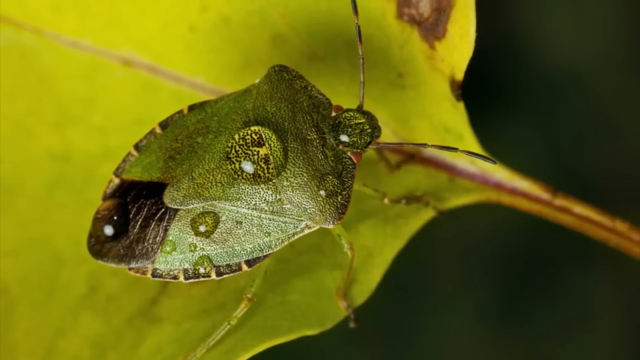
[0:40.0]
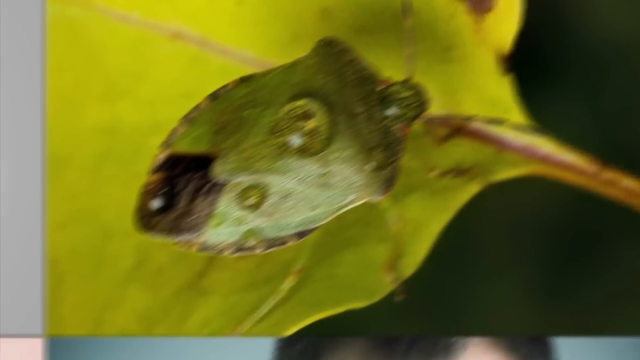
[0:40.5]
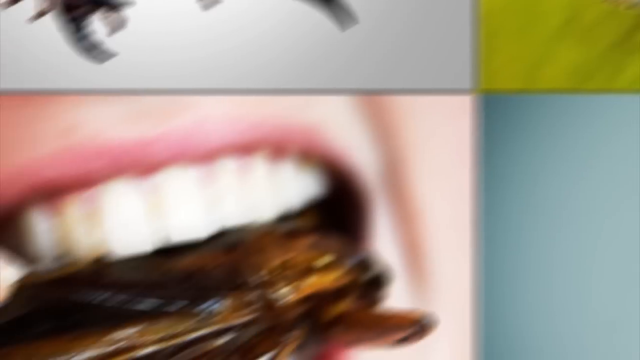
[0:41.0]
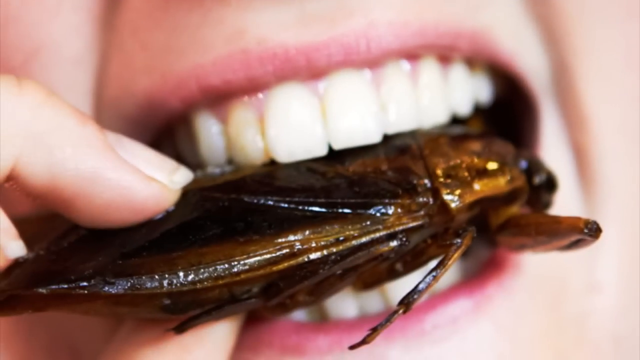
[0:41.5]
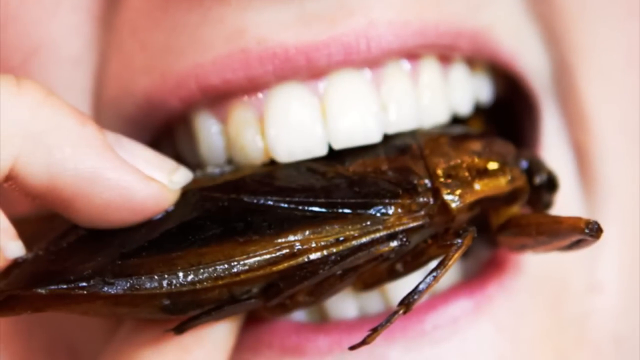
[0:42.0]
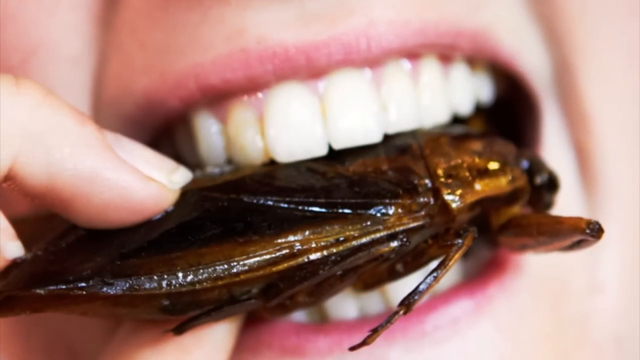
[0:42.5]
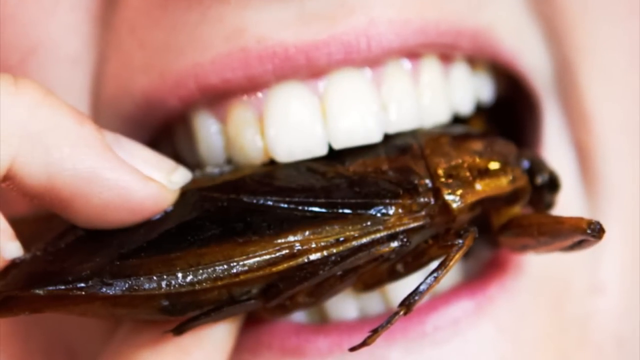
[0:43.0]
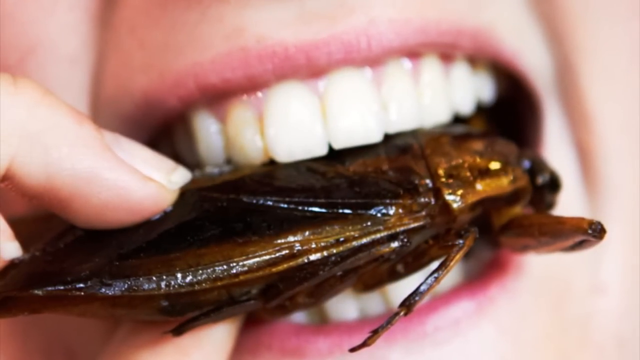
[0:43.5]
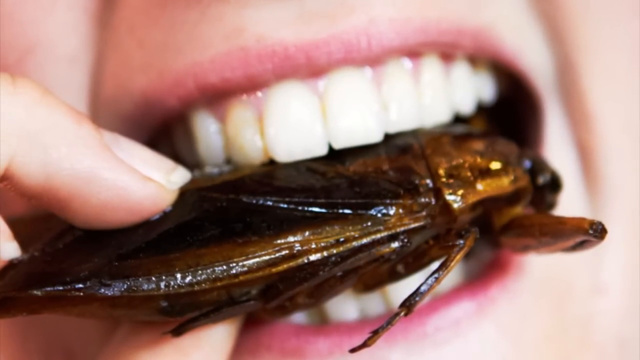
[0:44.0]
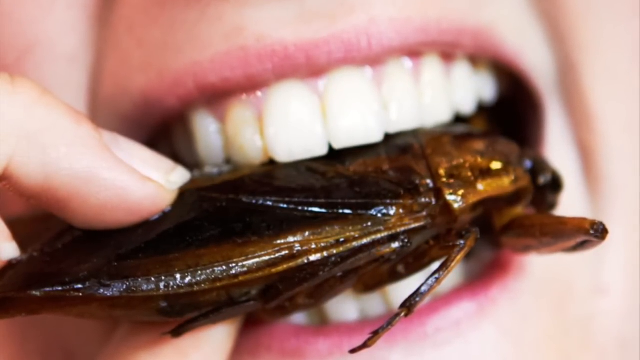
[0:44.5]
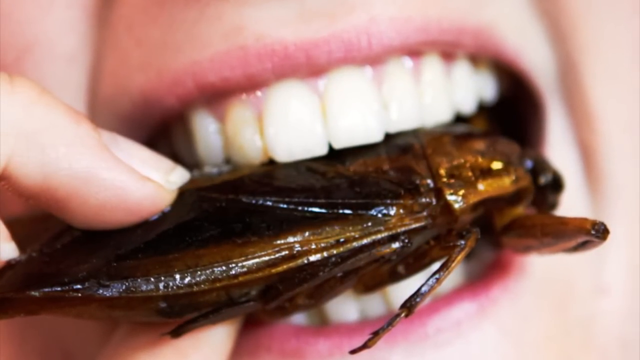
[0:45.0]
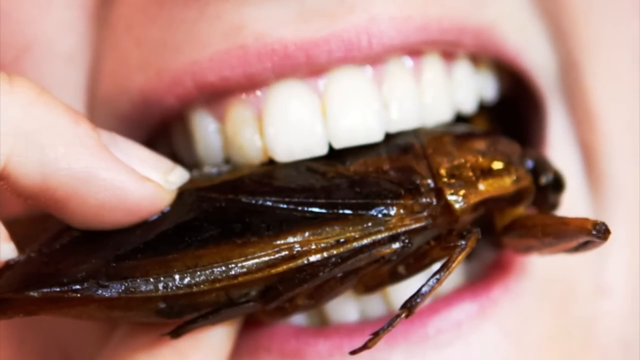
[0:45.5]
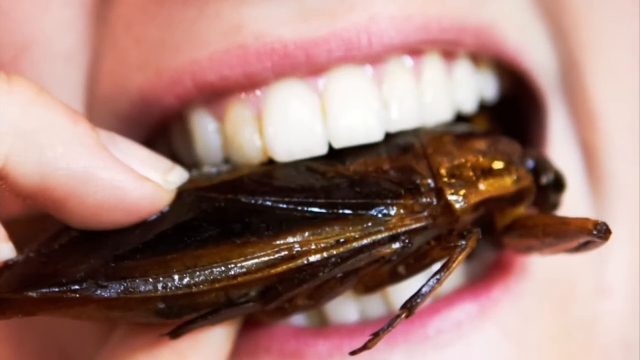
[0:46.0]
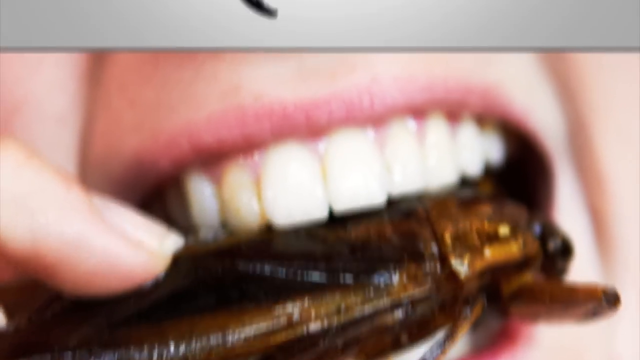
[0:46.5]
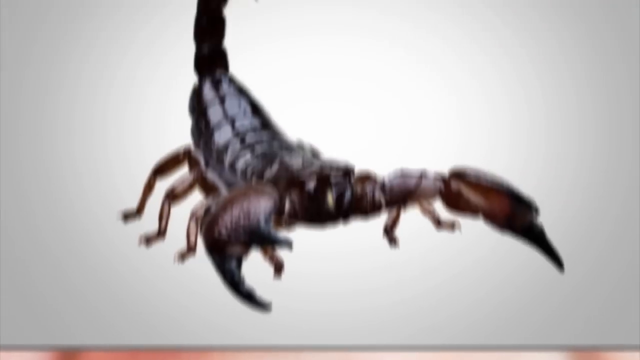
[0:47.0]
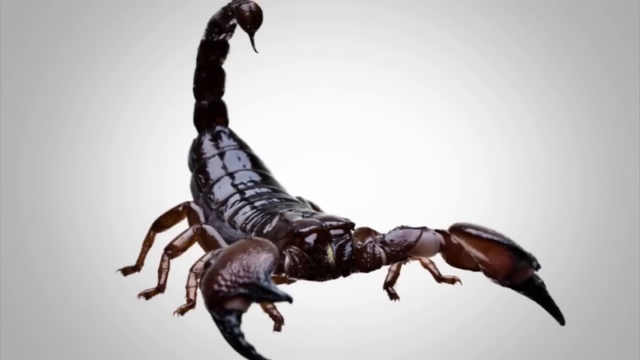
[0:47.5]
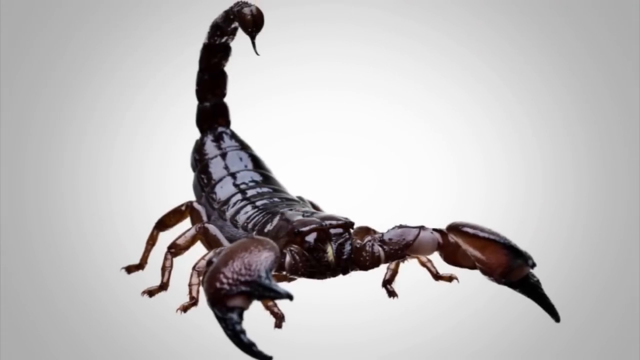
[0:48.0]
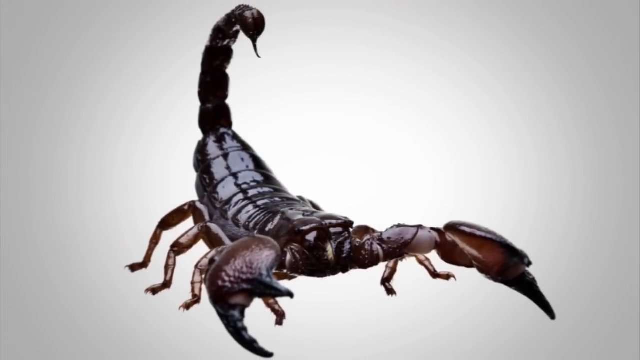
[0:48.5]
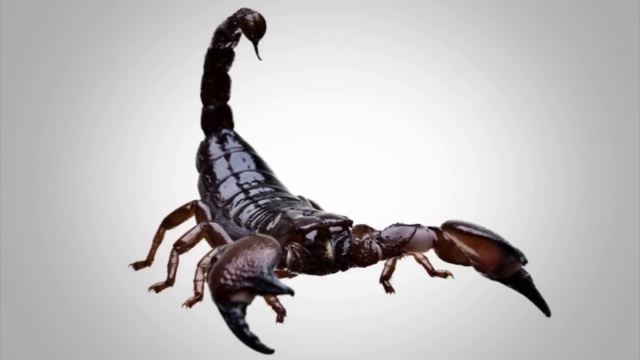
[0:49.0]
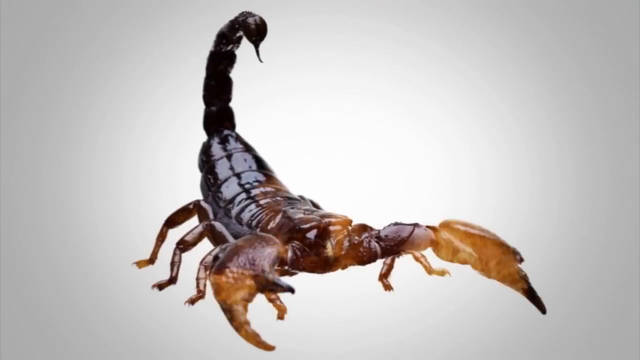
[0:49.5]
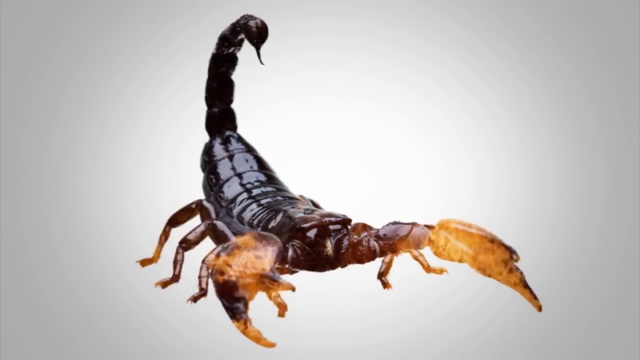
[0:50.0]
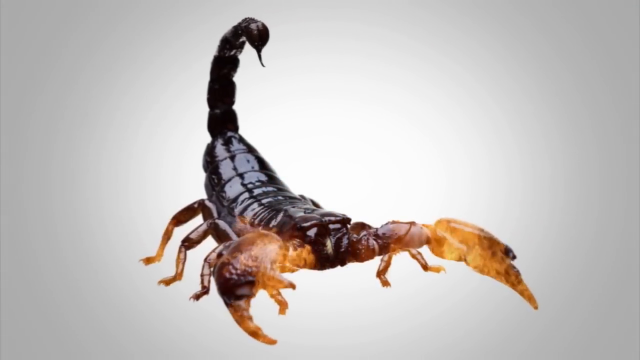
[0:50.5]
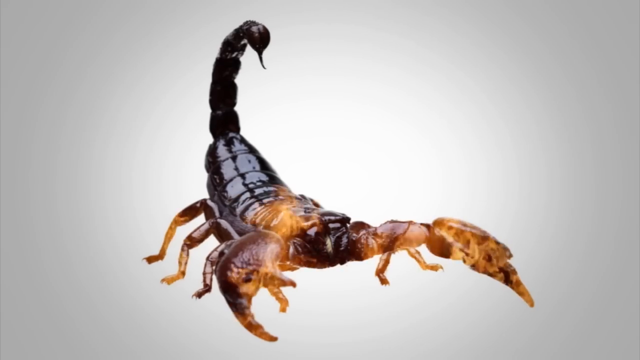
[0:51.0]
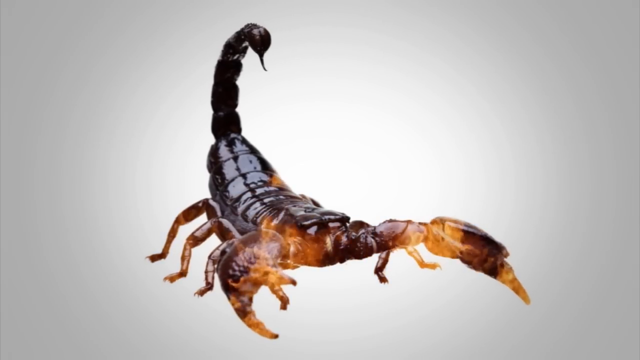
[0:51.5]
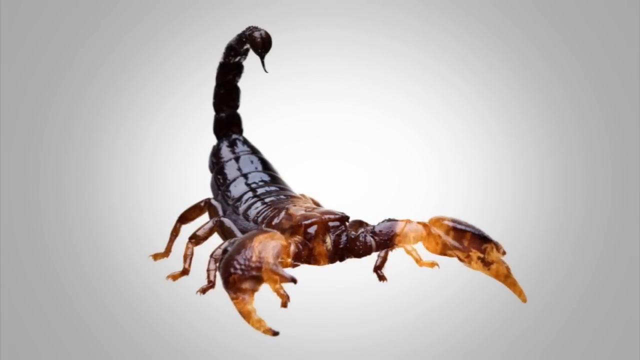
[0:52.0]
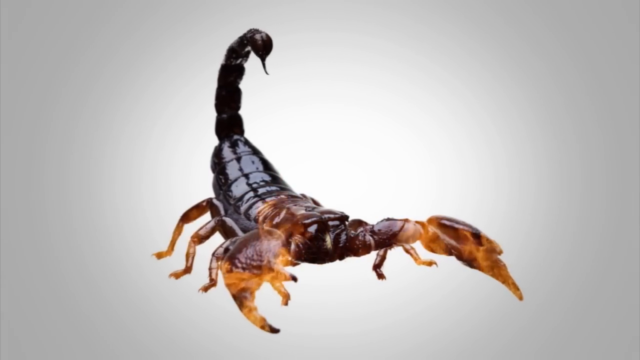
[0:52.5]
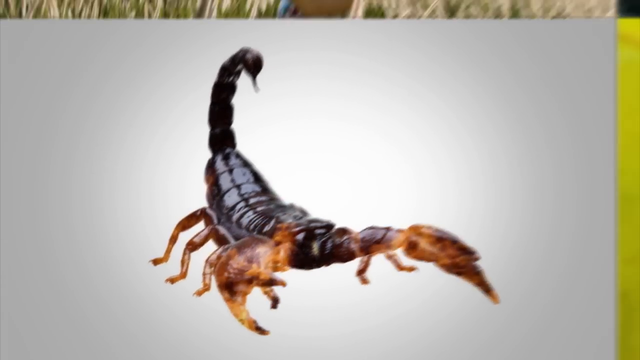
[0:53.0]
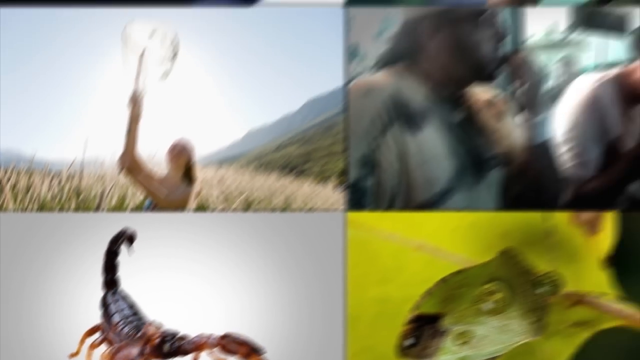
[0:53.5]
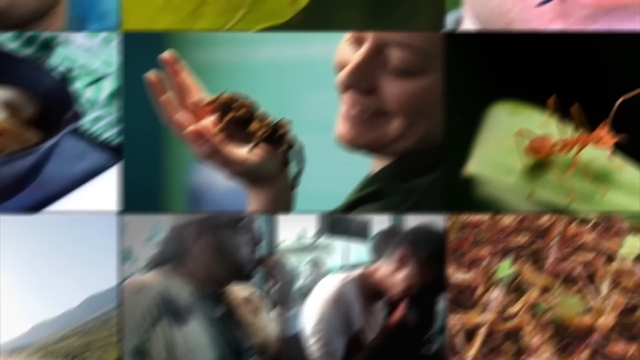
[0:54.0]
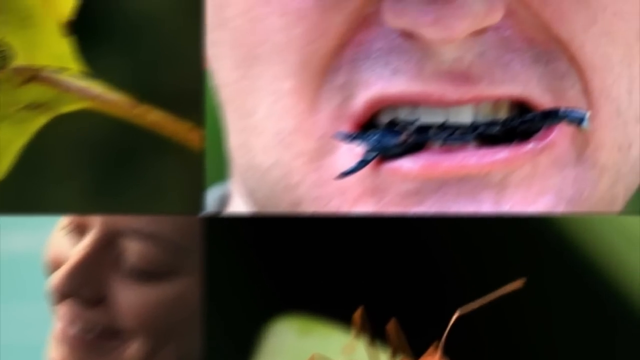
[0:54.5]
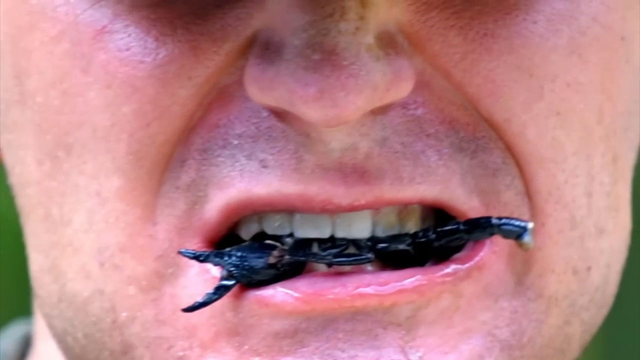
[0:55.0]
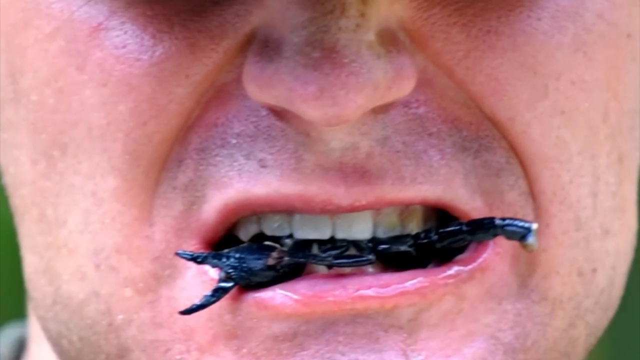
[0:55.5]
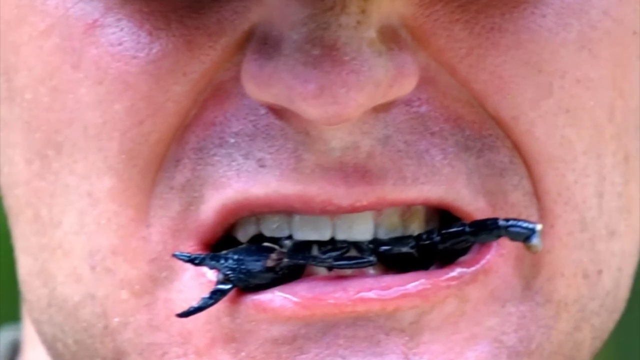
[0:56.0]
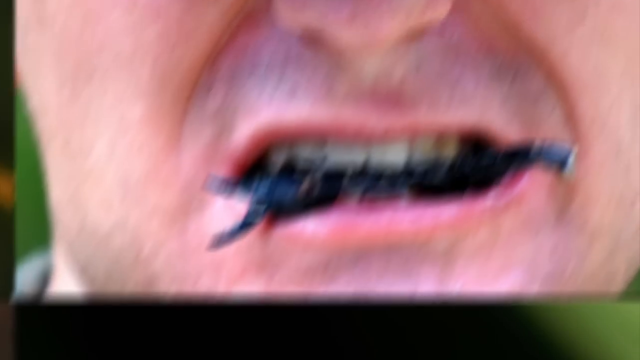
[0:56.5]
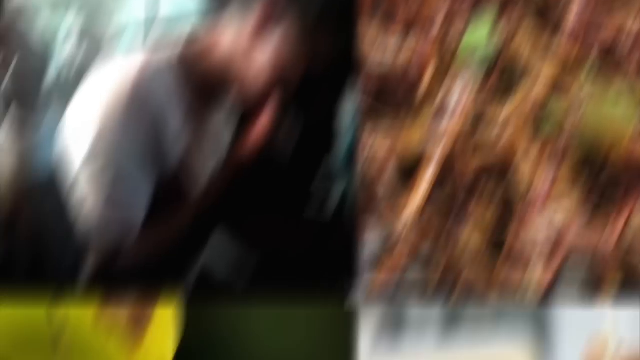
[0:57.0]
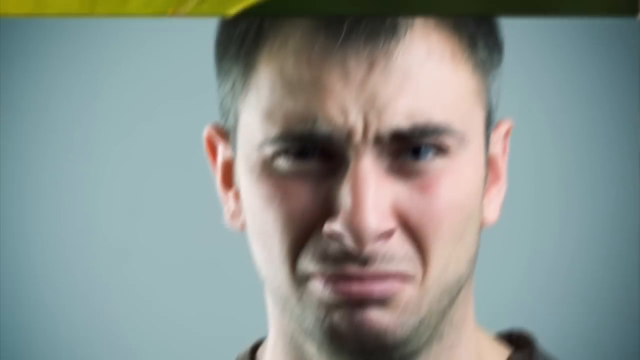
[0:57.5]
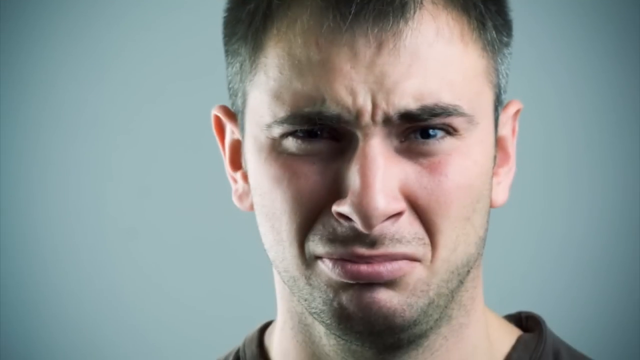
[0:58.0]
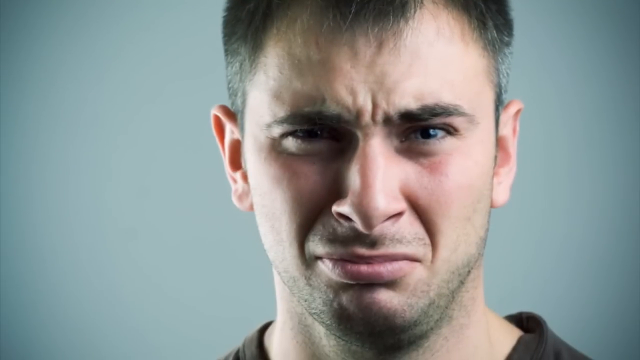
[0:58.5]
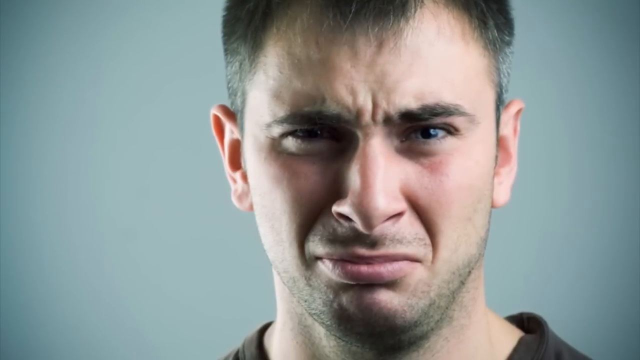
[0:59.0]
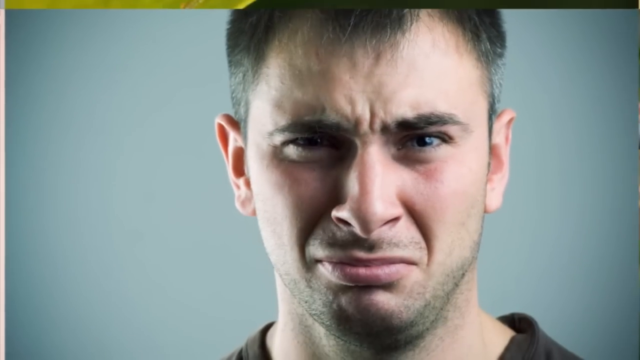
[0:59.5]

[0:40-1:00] A green stink bug with little water droplets on it is perched on a very vibrant green leaf. A picture follows of someone's teeth as they eat a brown bug with wings, either a grasshopper or a cockroach. A scorpion appears, and flames start emerging from it. A man is then shown with the scorpion's tail in his mouth. Next is a picture of a man who looks very displeased, before the view begins to move to a different picture.